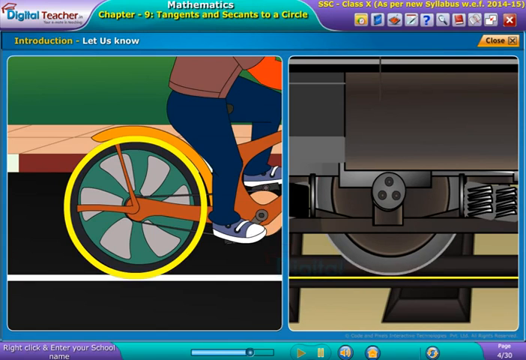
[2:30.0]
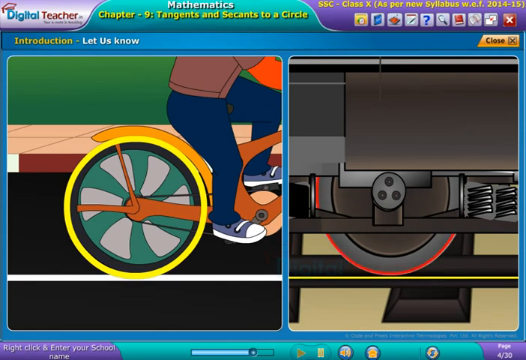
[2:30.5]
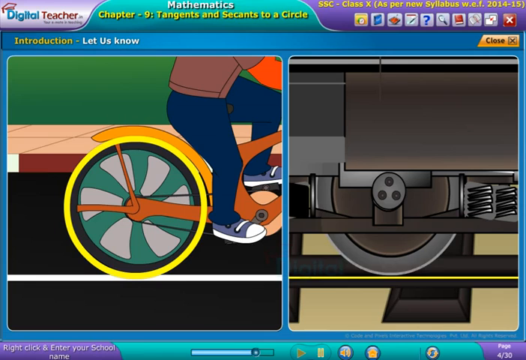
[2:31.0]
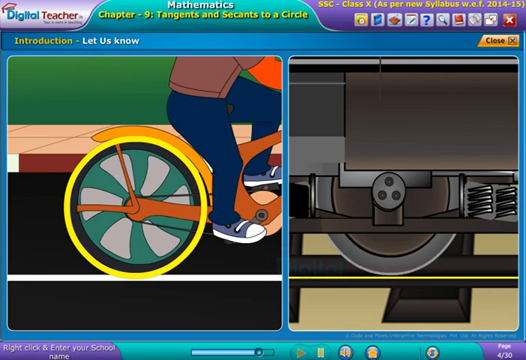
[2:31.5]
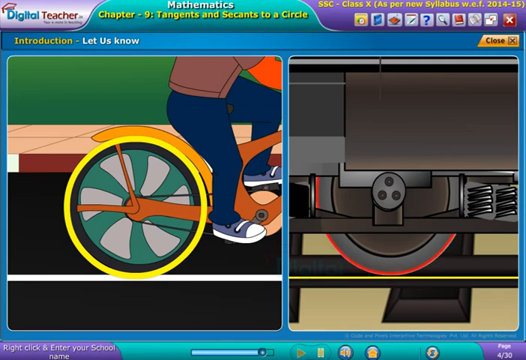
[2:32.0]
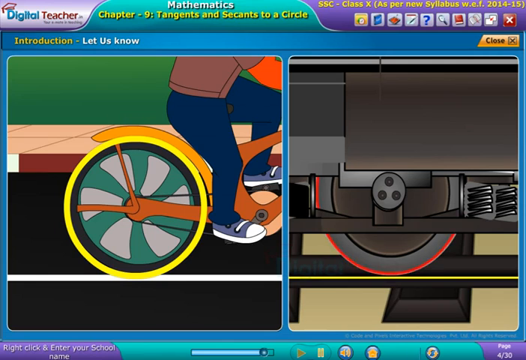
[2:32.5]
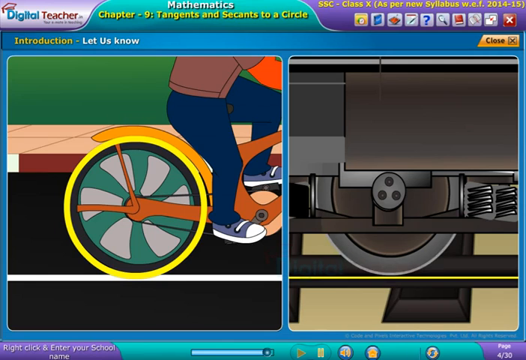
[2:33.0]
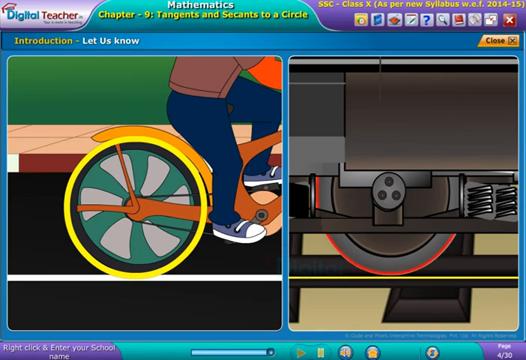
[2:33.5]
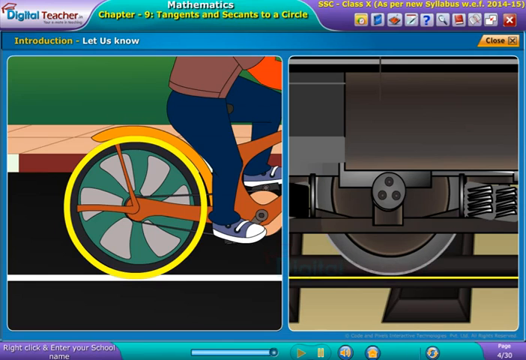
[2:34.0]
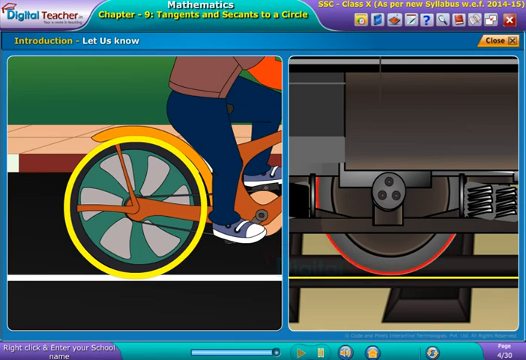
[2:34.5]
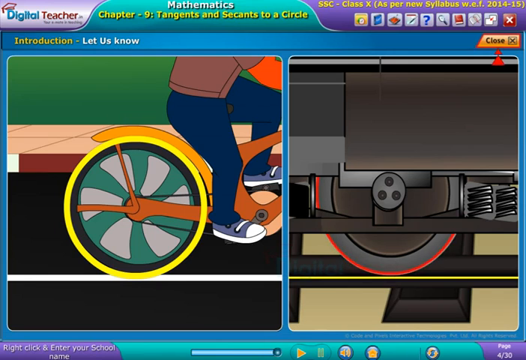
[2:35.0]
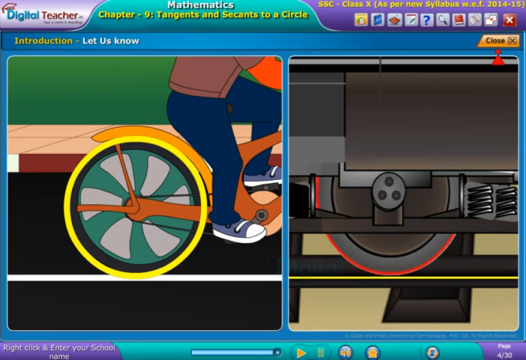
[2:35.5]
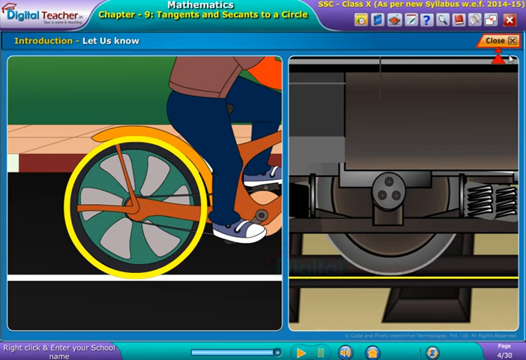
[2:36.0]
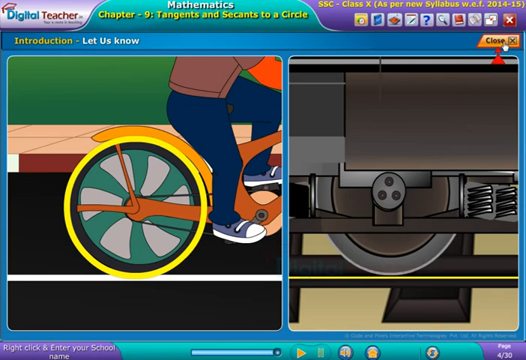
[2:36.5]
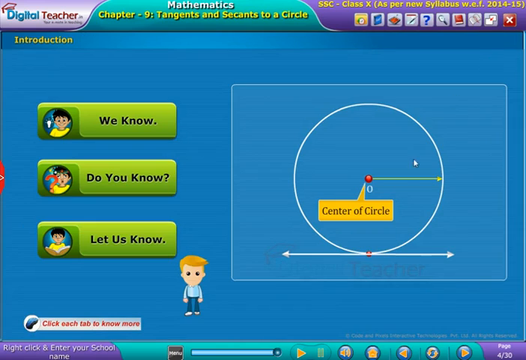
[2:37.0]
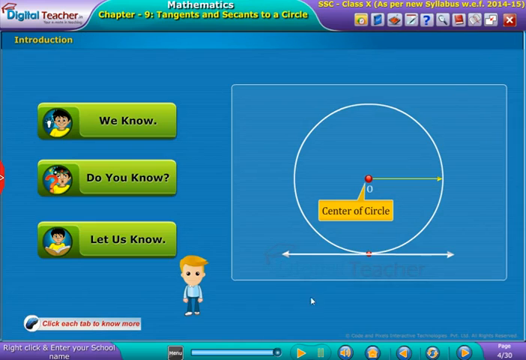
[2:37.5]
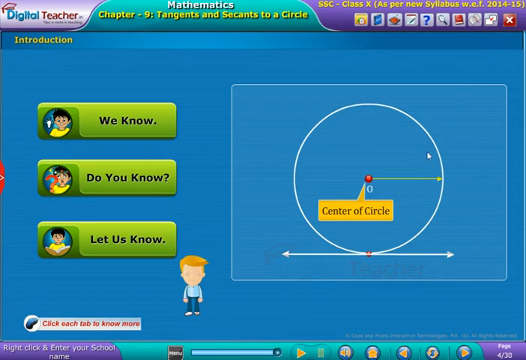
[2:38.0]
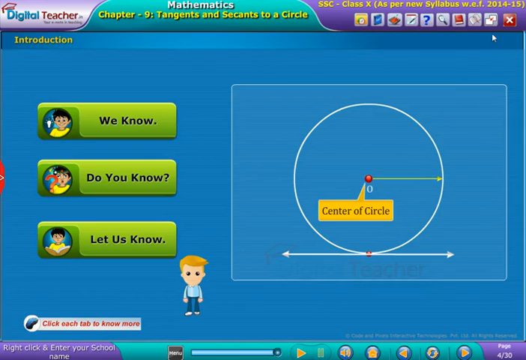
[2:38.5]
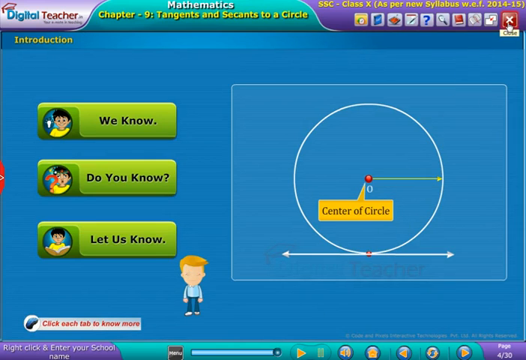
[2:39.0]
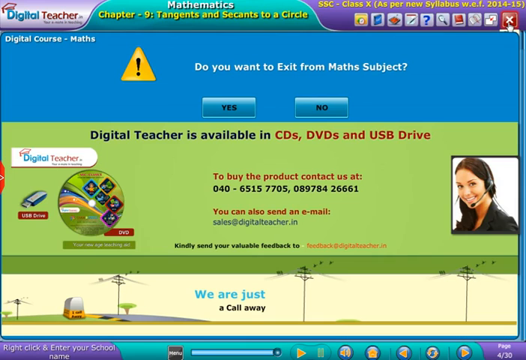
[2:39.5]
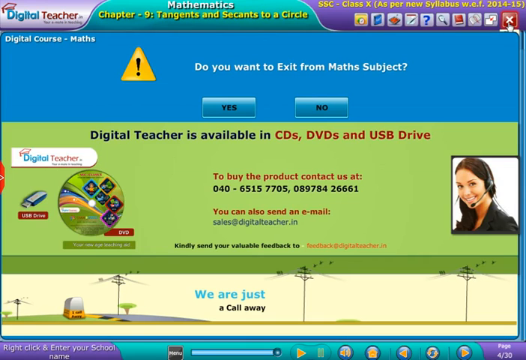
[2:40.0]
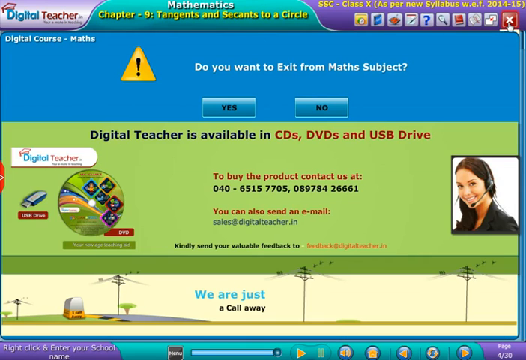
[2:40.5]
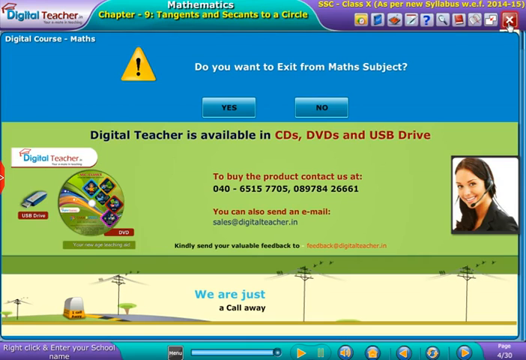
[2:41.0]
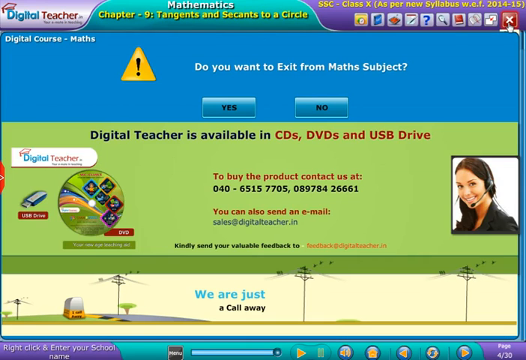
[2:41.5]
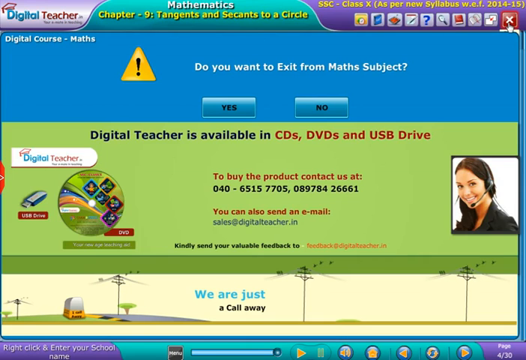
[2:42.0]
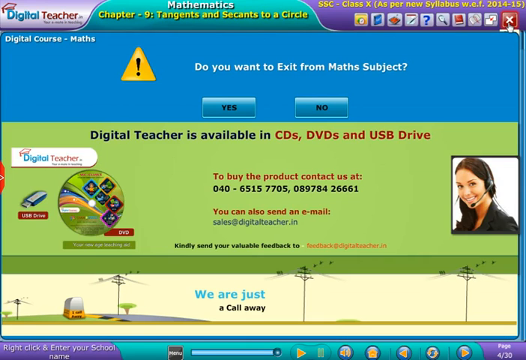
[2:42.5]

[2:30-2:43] More close-ups of the bike wheel and the train wheel are shown, with nothing new beyond what appeared at the end of the Do You Know section. The lesson is then exited, and a notification appears reading "Do you want to exit from math subjects?" with yes and no buttons; neither button is shown being pressed. The program is apparently called Digital Teacher, and CDs, DVDs, and USB drives are shown available to buy for it.